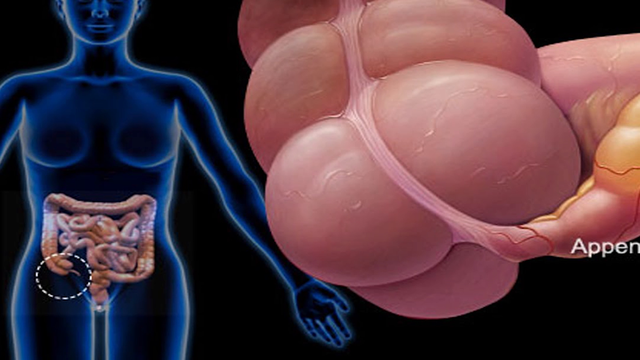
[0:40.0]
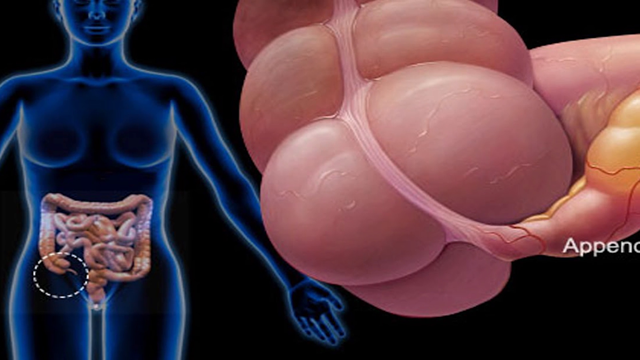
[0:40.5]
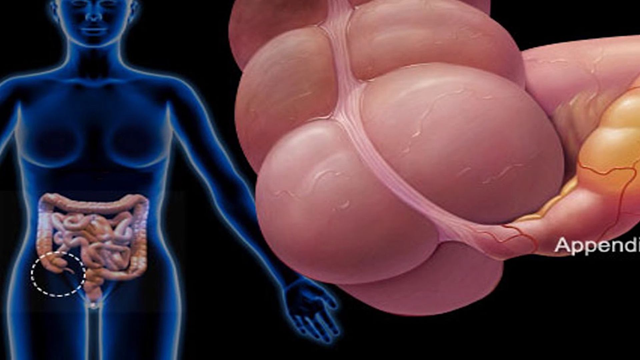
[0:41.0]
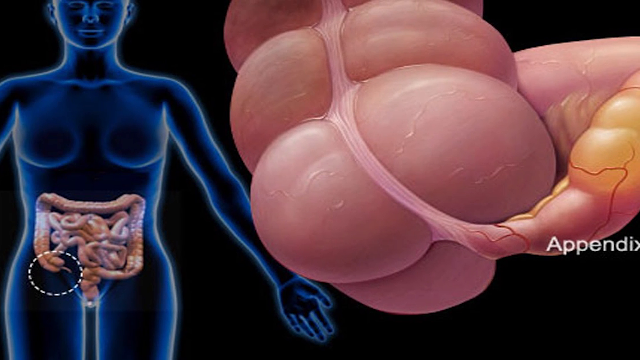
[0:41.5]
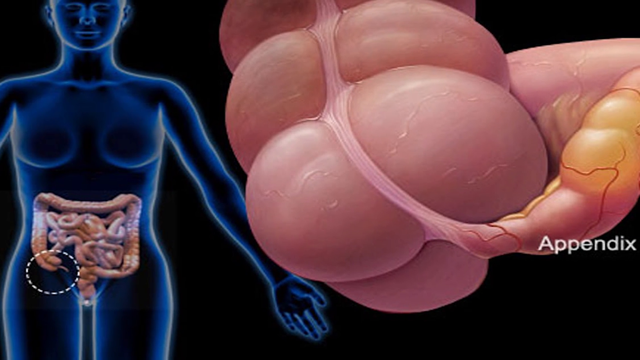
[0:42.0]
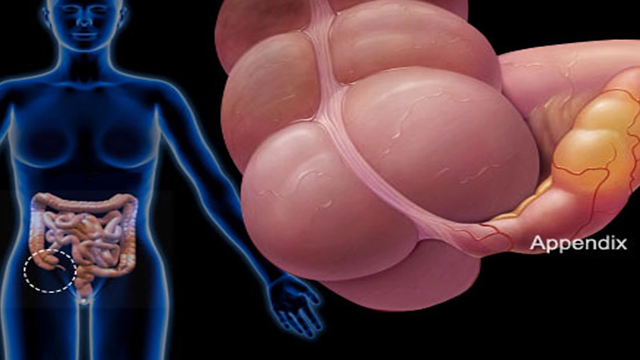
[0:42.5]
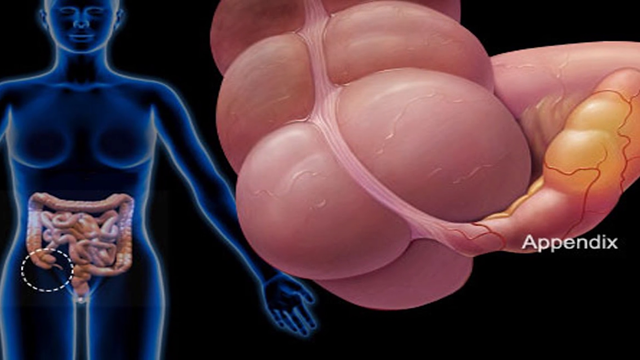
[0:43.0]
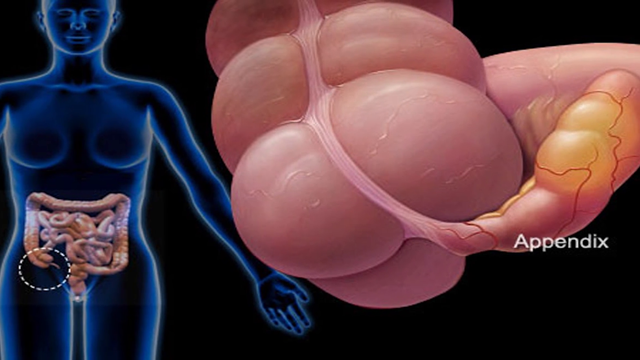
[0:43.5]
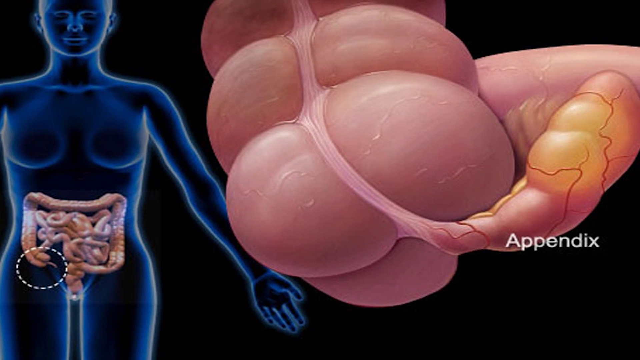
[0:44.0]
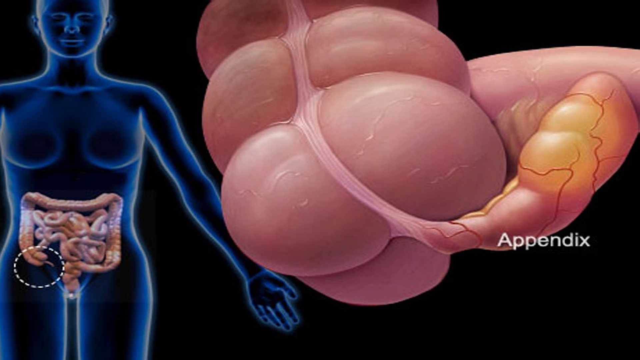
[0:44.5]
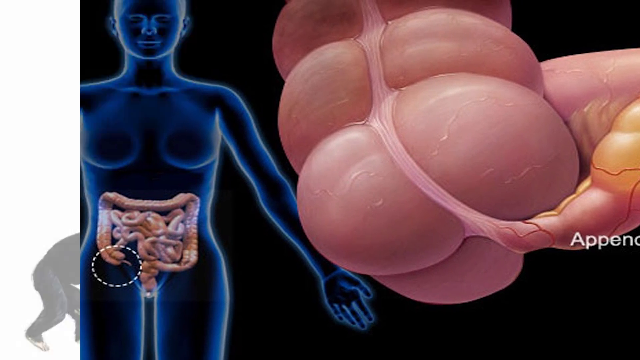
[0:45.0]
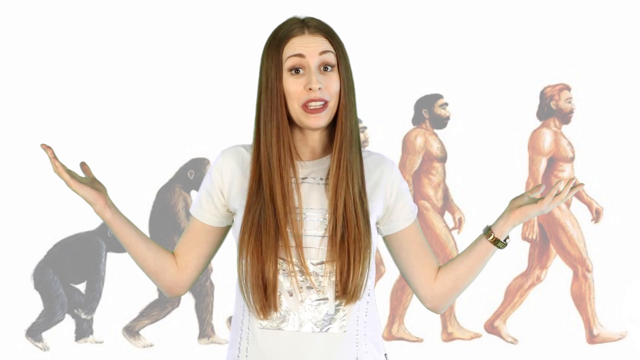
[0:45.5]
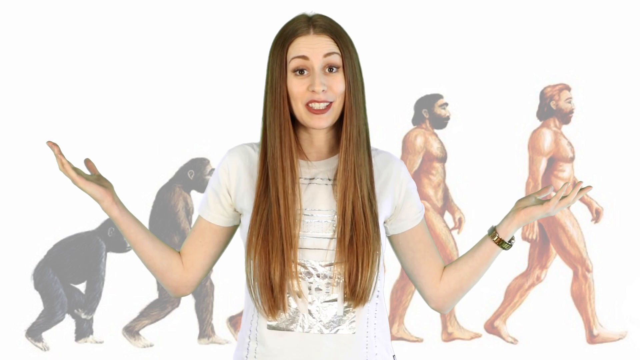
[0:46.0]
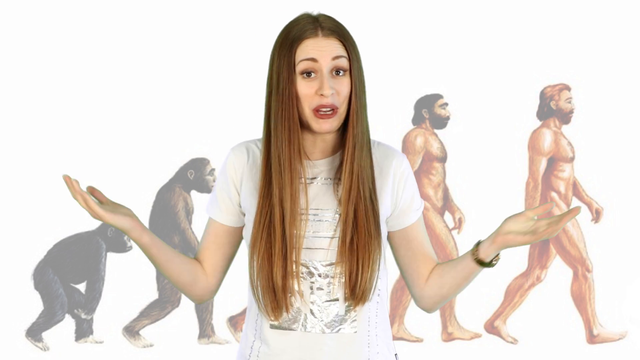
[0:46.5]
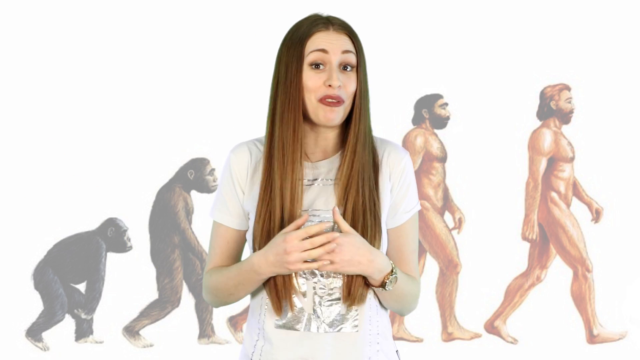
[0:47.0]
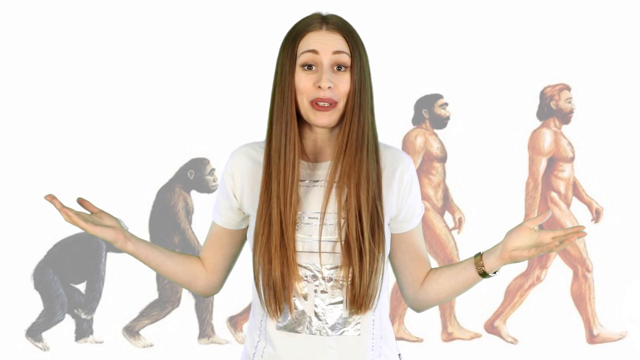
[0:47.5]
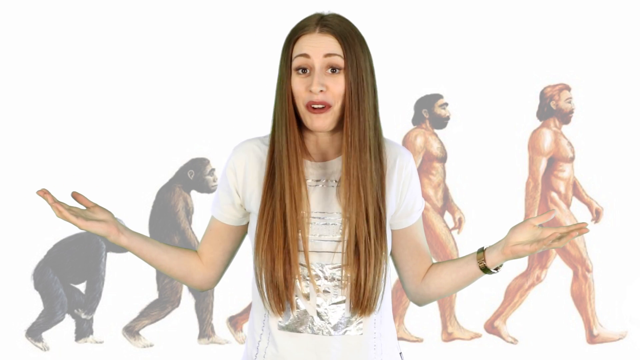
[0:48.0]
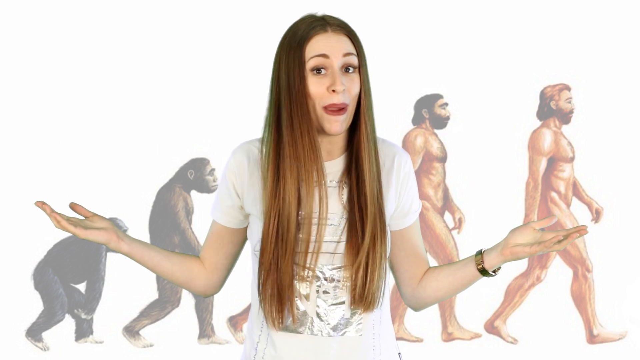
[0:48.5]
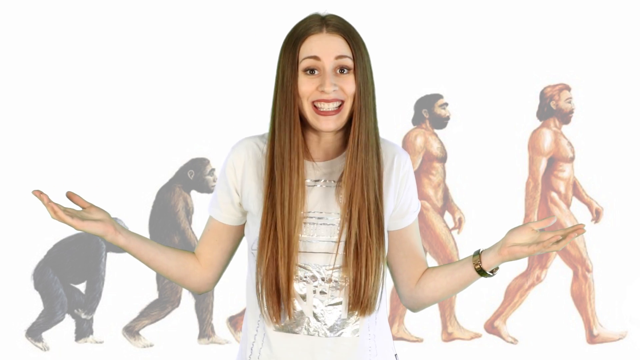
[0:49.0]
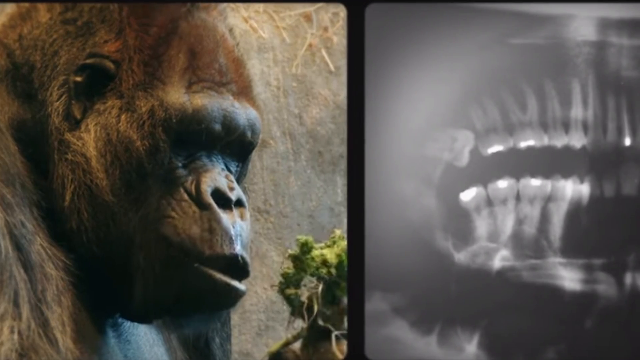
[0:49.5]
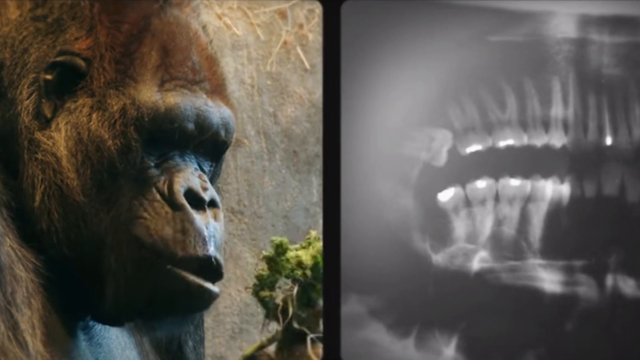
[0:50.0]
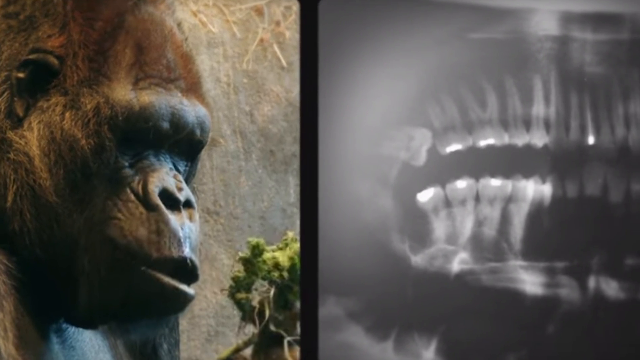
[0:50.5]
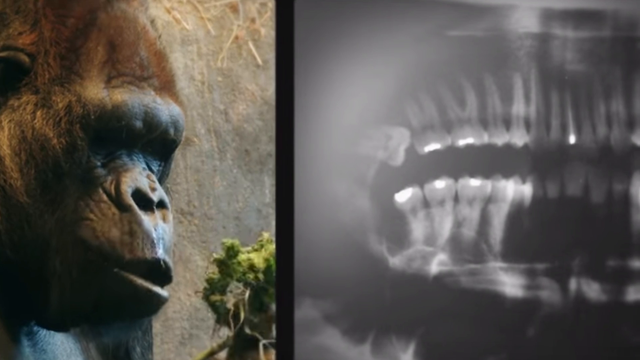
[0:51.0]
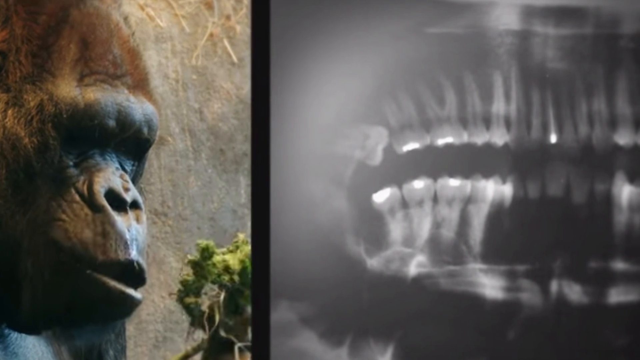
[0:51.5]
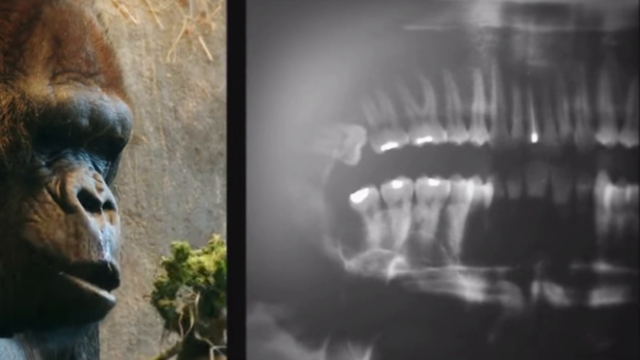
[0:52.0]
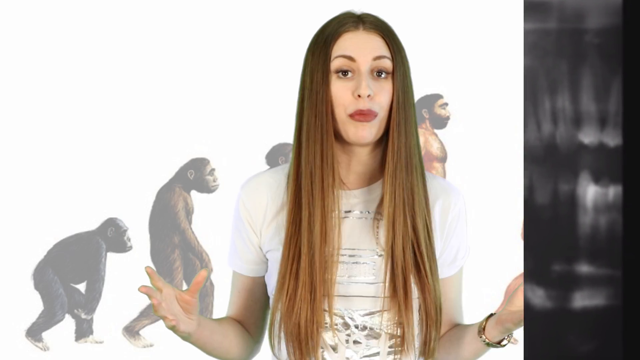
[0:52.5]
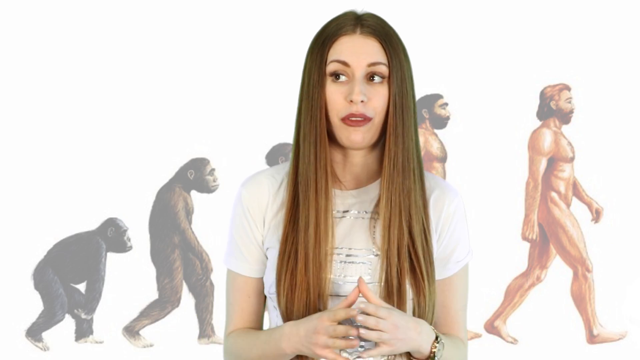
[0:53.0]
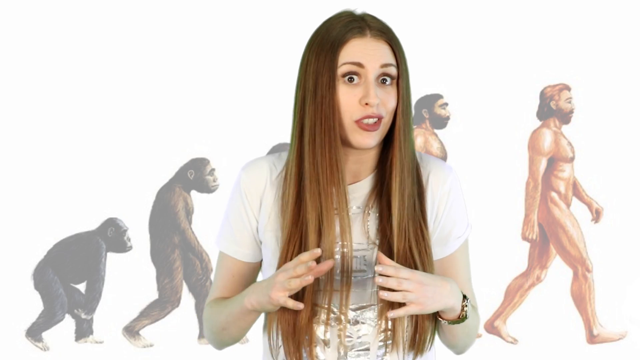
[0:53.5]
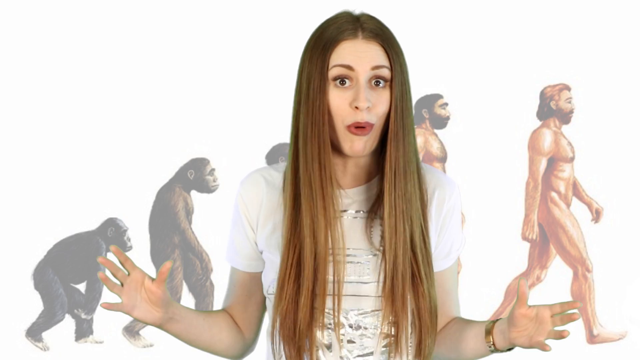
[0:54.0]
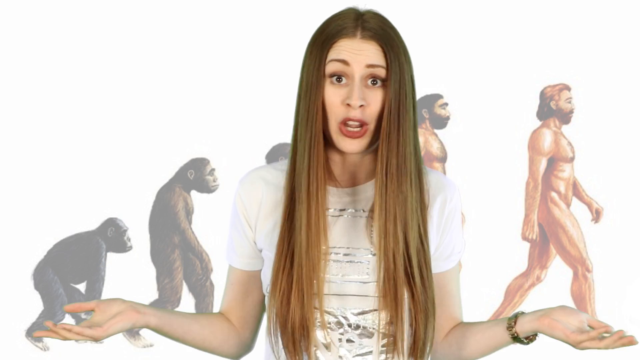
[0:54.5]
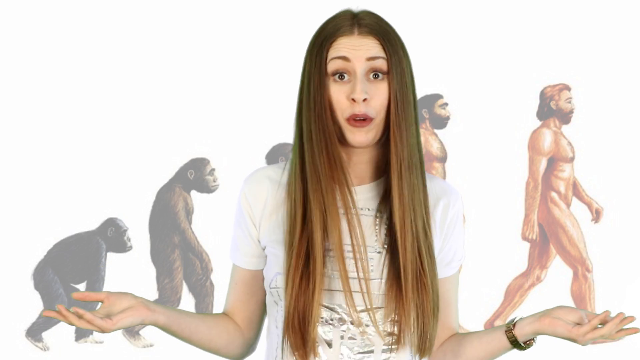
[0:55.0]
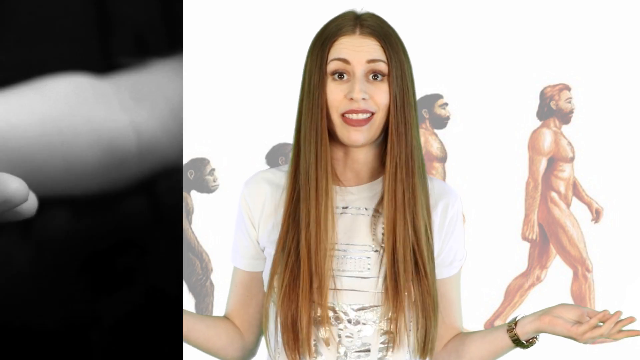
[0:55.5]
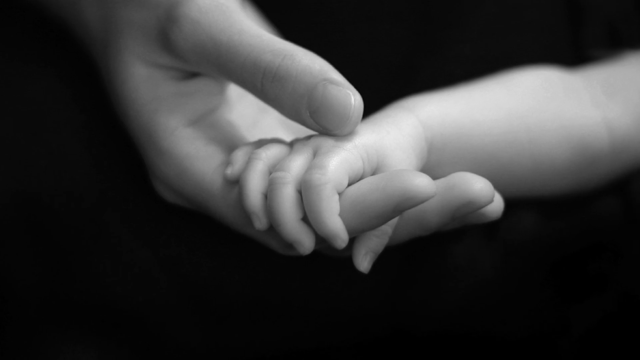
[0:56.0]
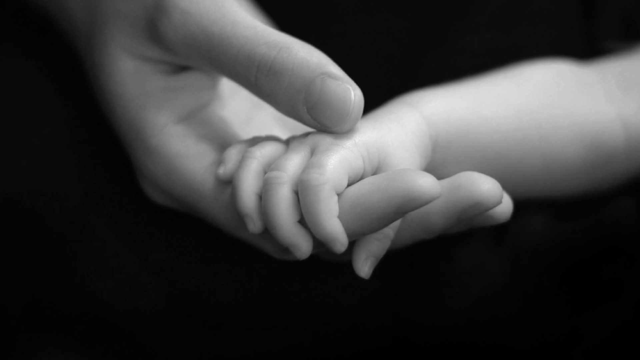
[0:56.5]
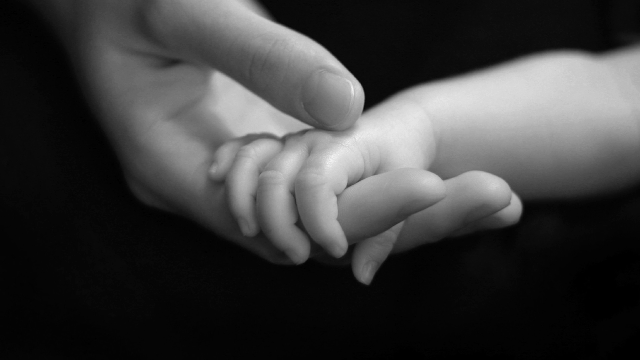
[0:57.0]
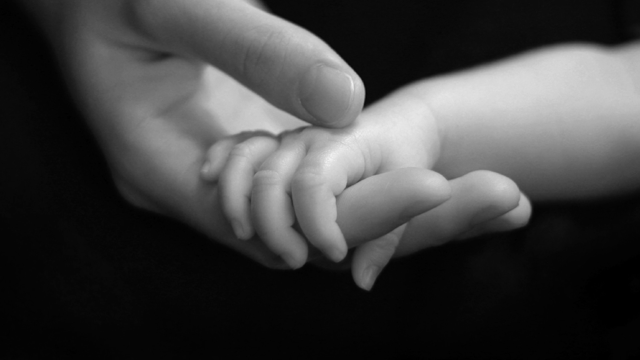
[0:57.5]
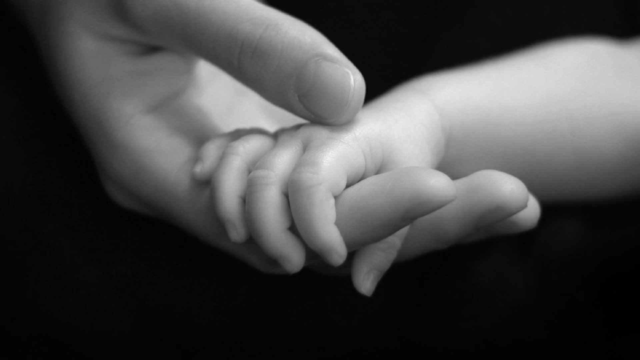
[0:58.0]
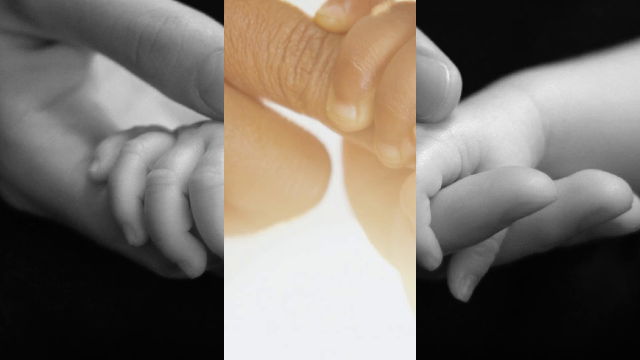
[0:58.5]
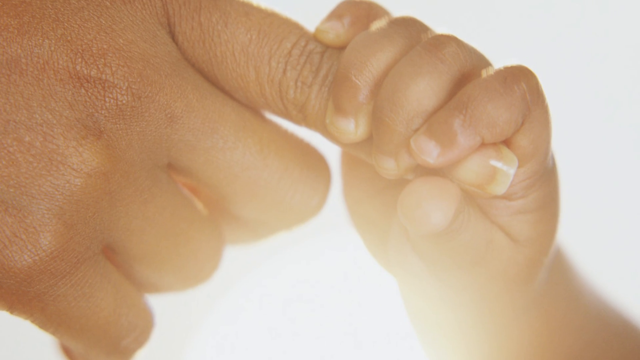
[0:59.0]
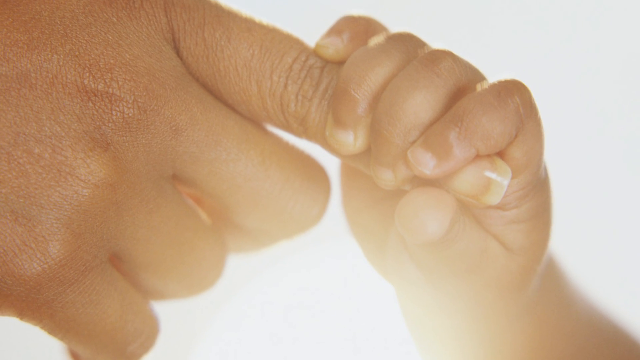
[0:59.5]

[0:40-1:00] The view zooms out to show an image of the small and large intestine in a transparent black human on the left and a close-up of the appendix on the right, labeled "Appendix". Charlotte is shown again, wearing a watch on her left wrist; she stretches her arms out, brings them back together and waves them around, shaking her head and showing her waist-length long hair. An image of a gorilla appears on the left alongside an x-ray of a dental skeleton on the right. Wearing a white t-shirt, with the evolution image in the background, she keeps speaking to the camera, waving her hands, looking directly at the camera with wide eyes and shaking her head. An image of a baby's hand holding a mother's finger is shown, followed by another image of a baby's hand holding a mother's finger up to the light. She appears to be presenting images to illustrate what she says while using hand gestures, seemingly passionate about the subject.